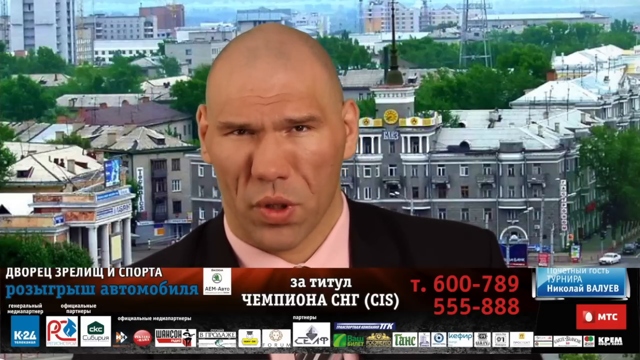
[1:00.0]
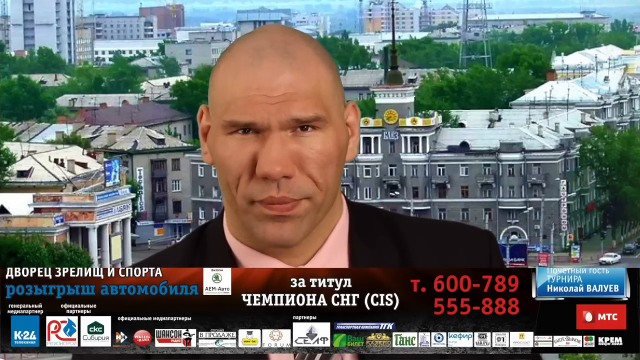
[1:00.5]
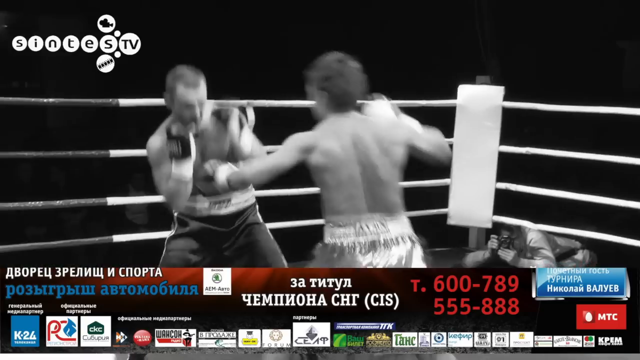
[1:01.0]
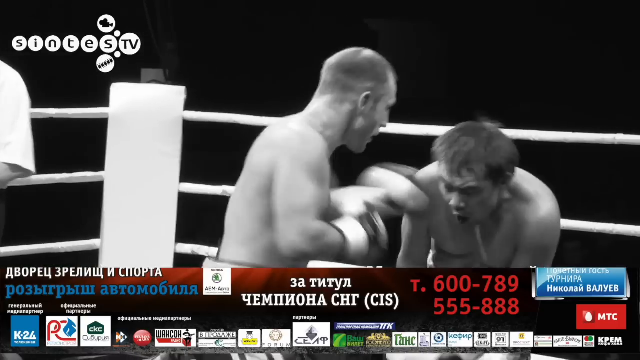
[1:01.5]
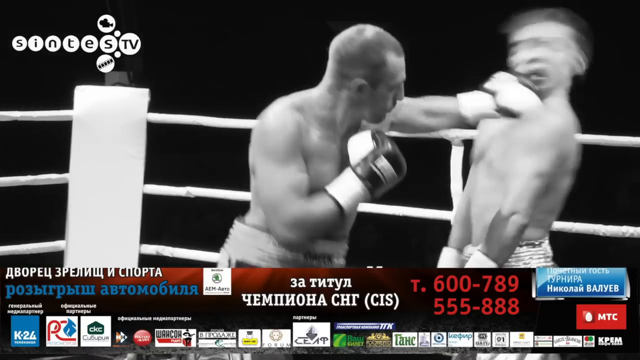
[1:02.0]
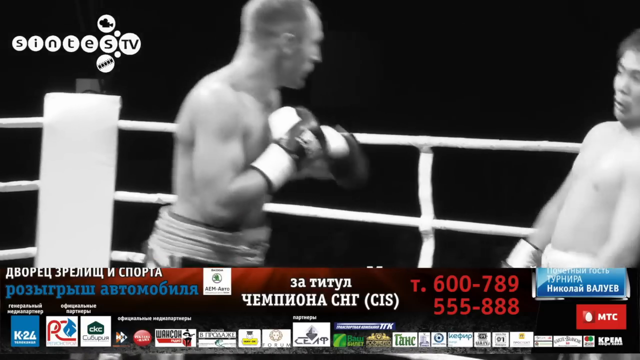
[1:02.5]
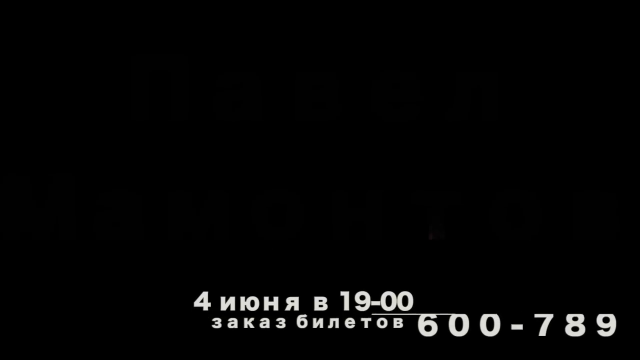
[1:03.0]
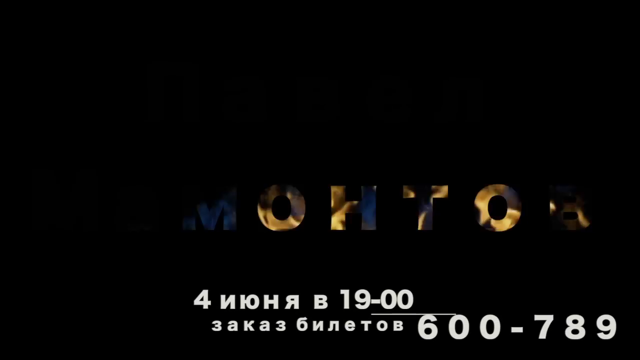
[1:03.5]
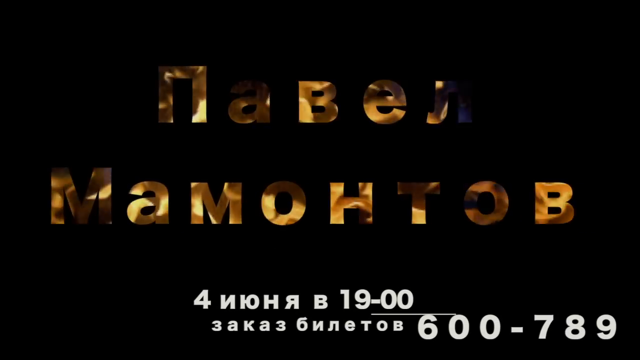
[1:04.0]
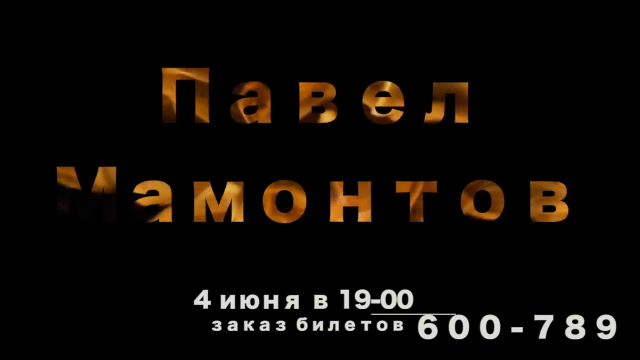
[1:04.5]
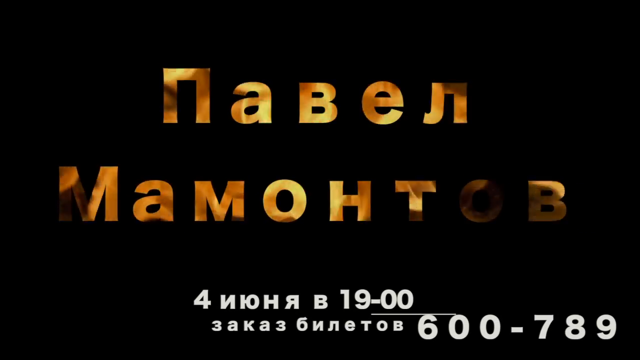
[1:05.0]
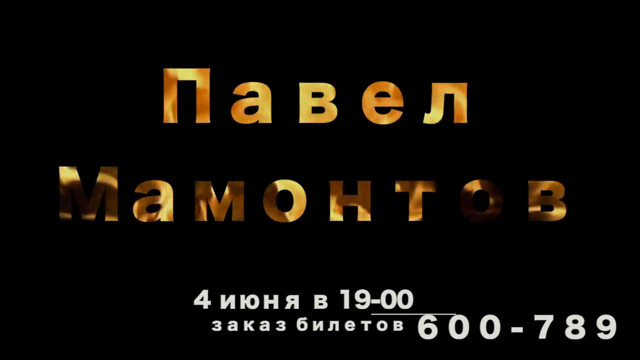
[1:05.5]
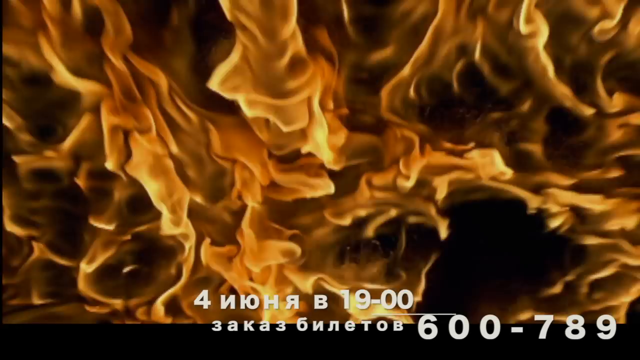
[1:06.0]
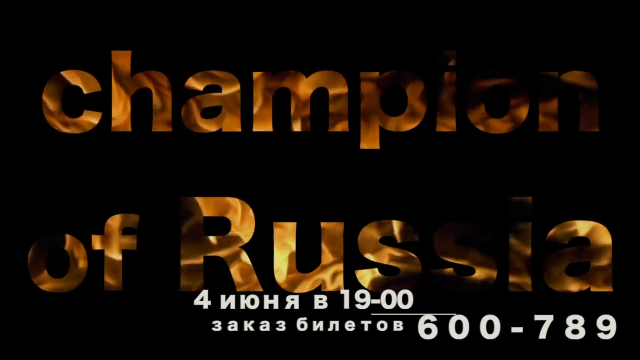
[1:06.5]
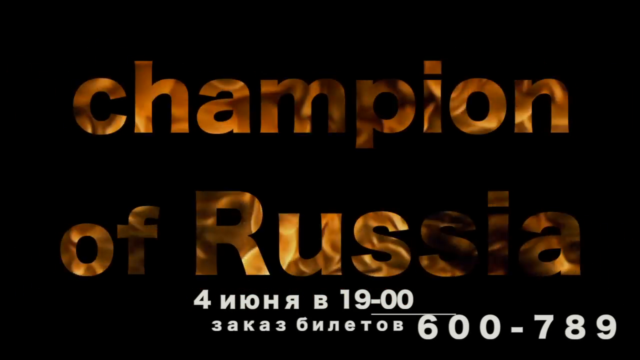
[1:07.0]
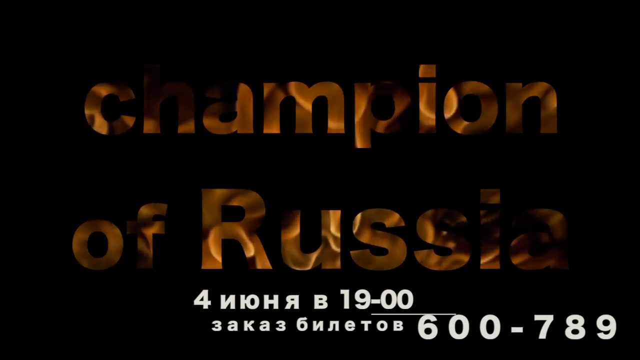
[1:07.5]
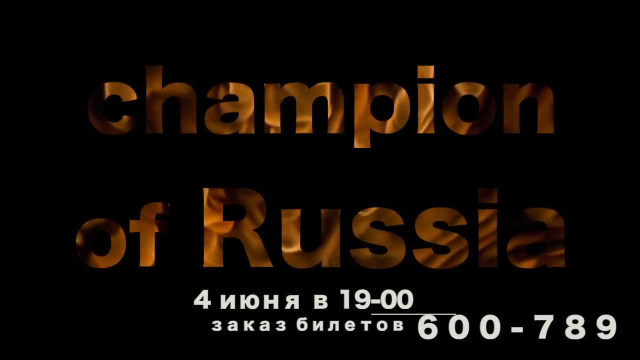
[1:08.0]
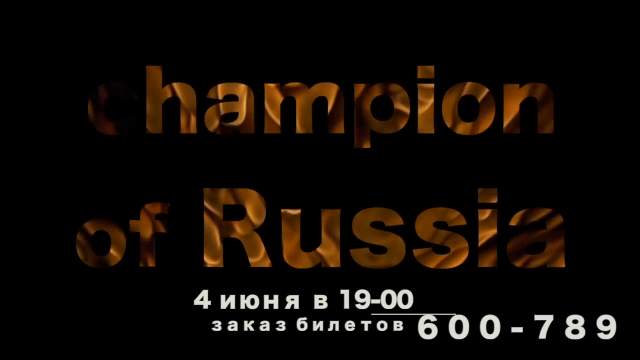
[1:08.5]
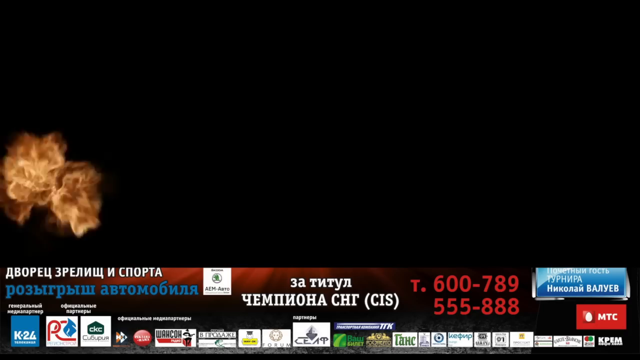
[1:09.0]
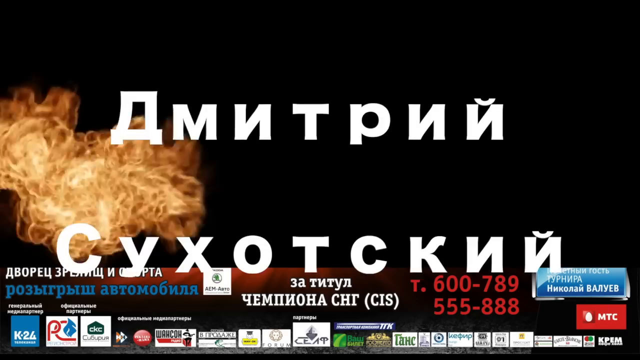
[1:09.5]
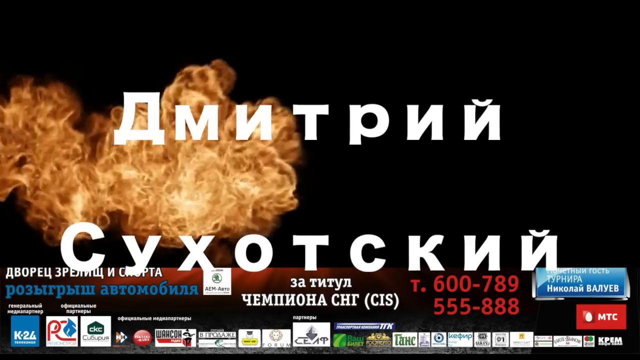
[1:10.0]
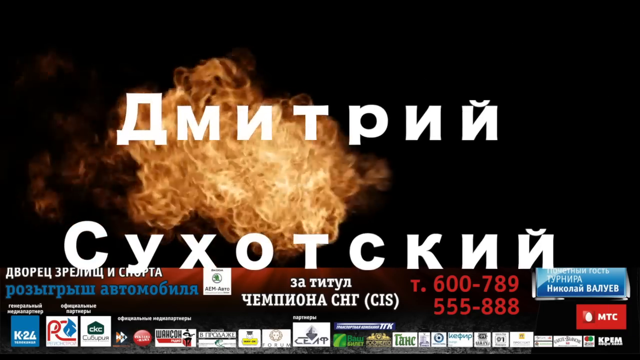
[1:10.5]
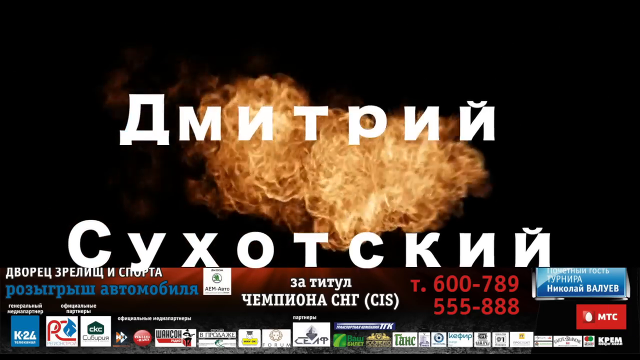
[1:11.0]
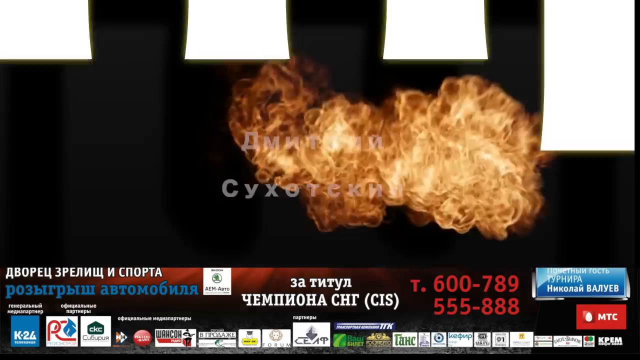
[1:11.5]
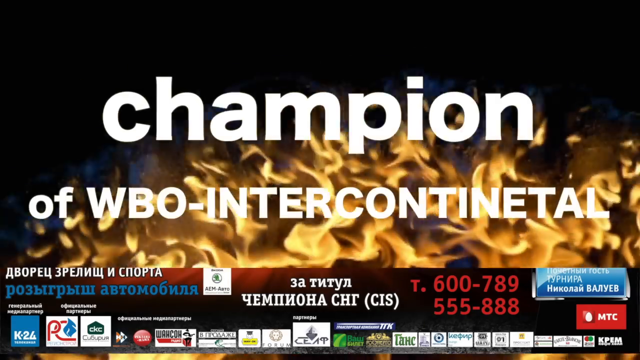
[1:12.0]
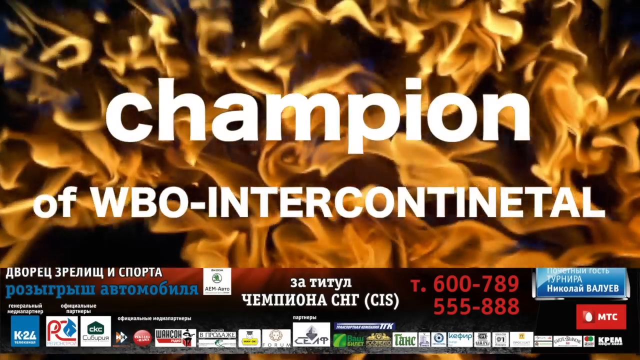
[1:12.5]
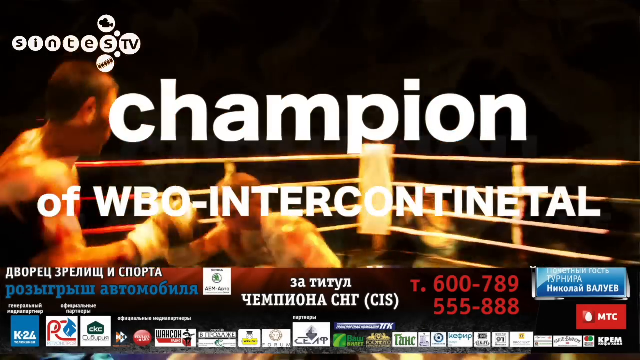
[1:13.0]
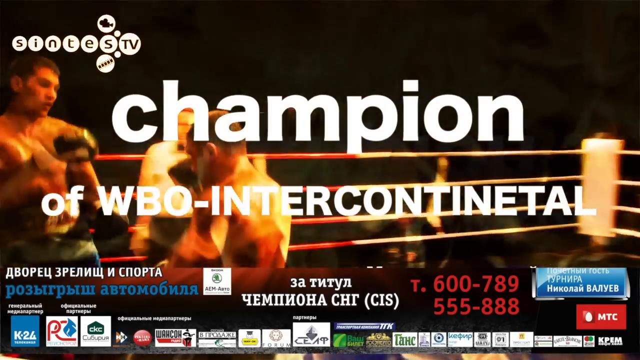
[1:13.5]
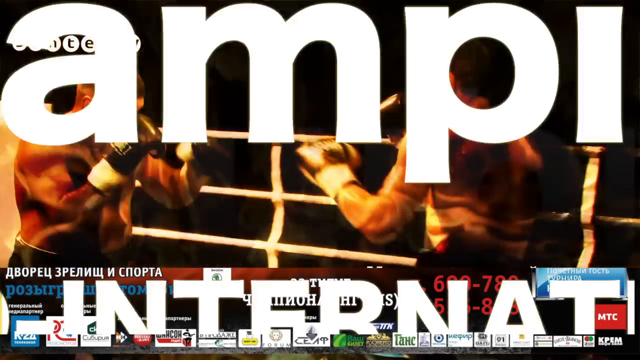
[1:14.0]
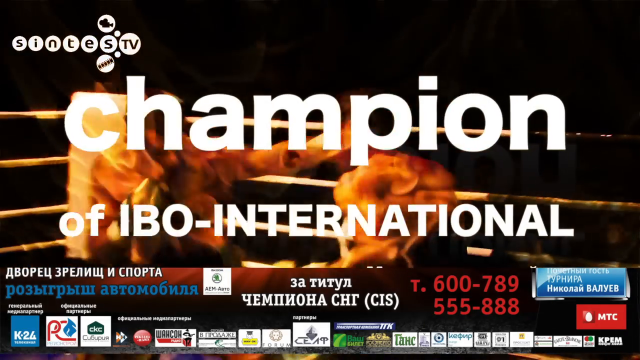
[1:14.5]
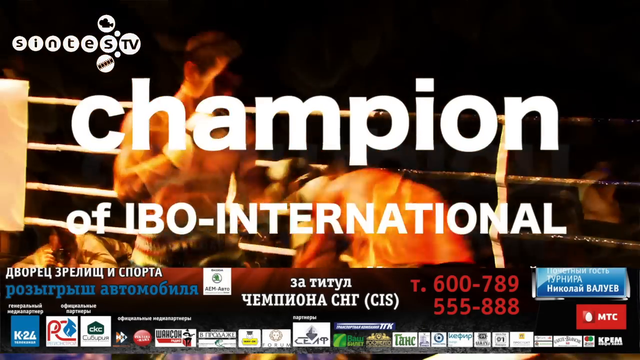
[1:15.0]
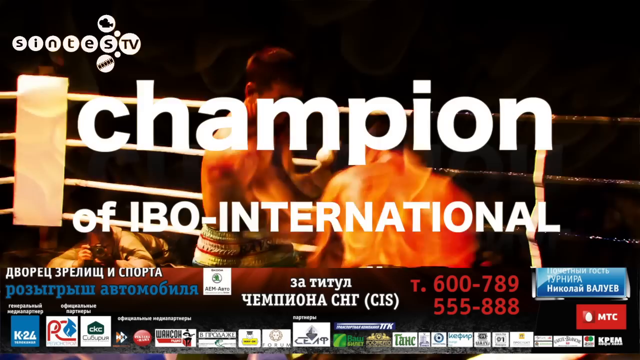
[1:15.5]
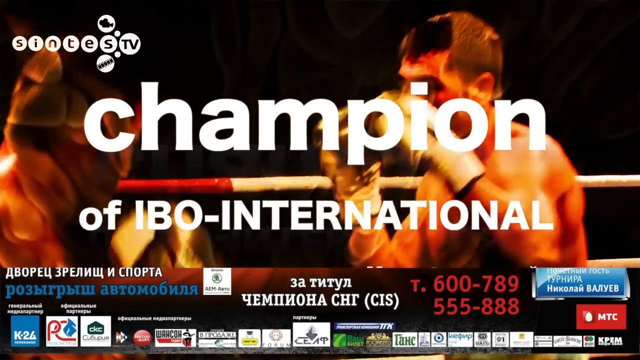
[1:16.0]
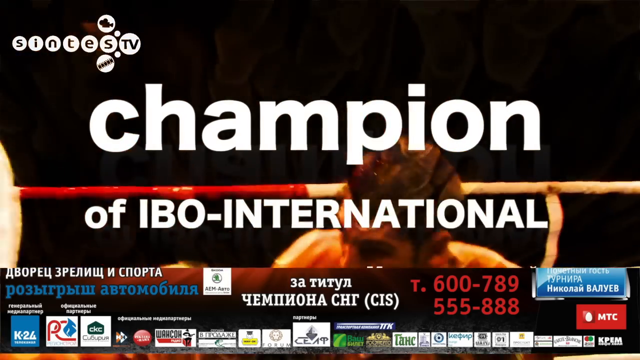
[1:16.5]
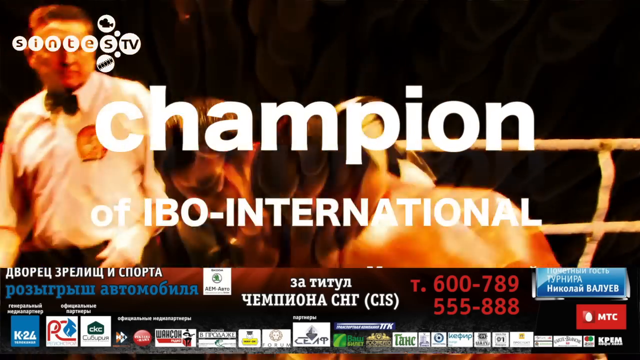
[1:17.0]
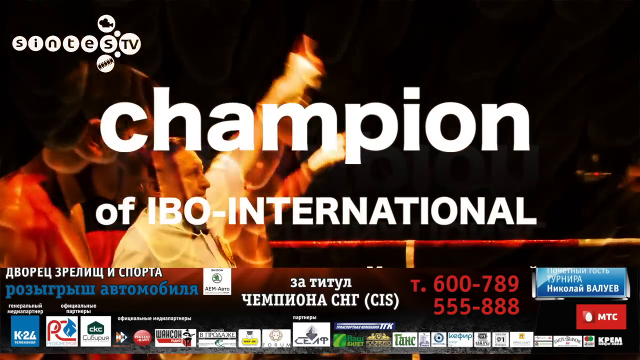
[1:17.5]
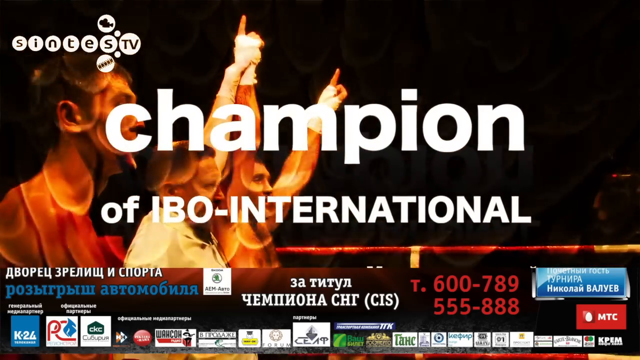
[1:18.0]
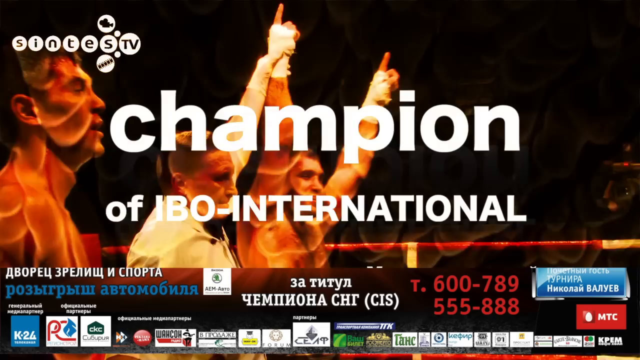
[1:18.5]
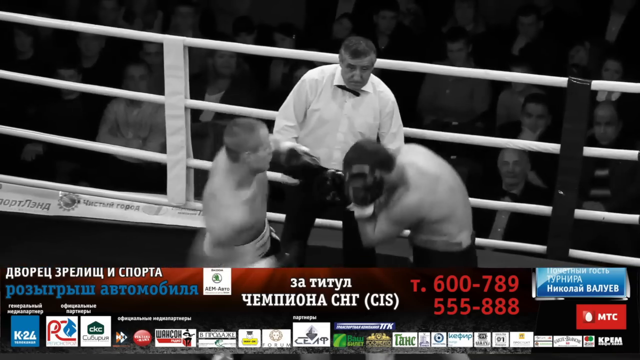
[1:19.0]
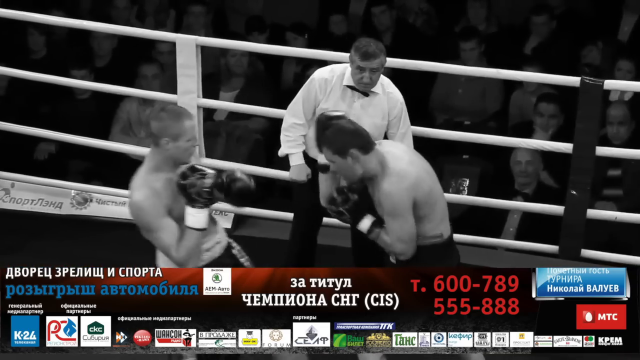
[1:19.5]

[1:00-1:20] The bald, white-skinned man in a black suit jacket and pink inner shirt looks directly at the camera, with a town or city landscape behind him: a large gray building is the biggest, with several other buildings and large green trees kind of between them, and it is daytime. The video then shows black-and-white boxing fights in which a person punches people in a boxing arena. Next, Russian text appears at the top on a black background, with a sort of dynamic fiery image in an orangish color inside it, and white Russian text is on the bottom right. The top text then changes to "champion of Russia" in English, with the dynamic fire inside each letter. White Russian text follows, stating champion of WBO international twice, over a background of a boxing match.